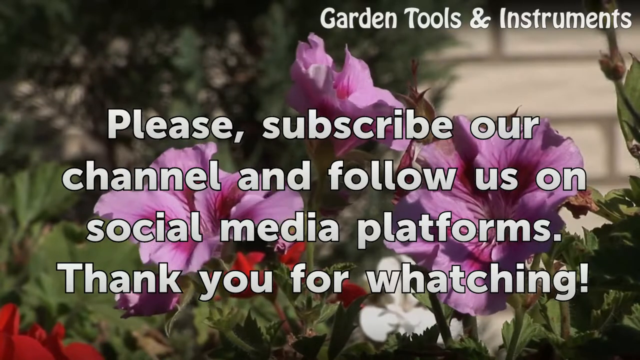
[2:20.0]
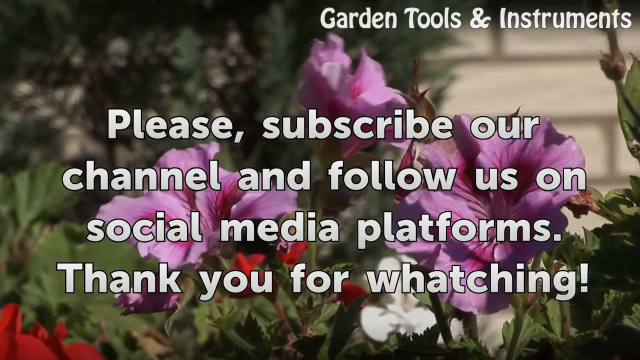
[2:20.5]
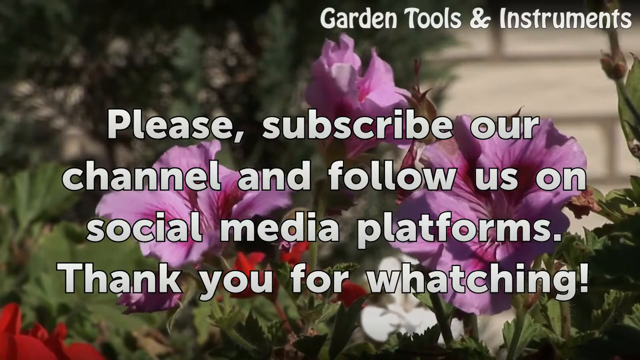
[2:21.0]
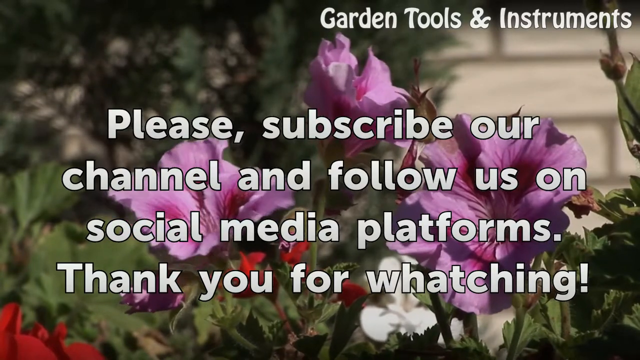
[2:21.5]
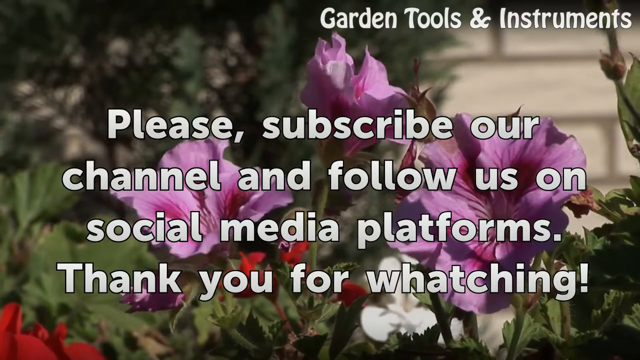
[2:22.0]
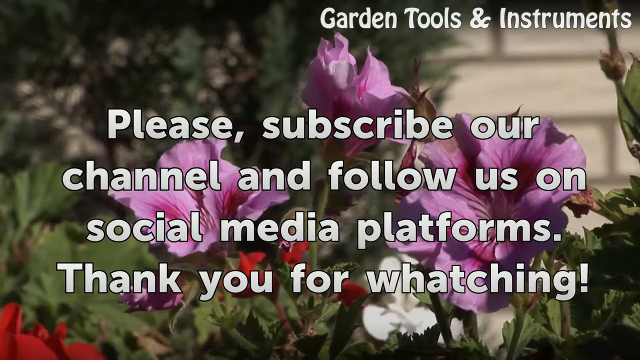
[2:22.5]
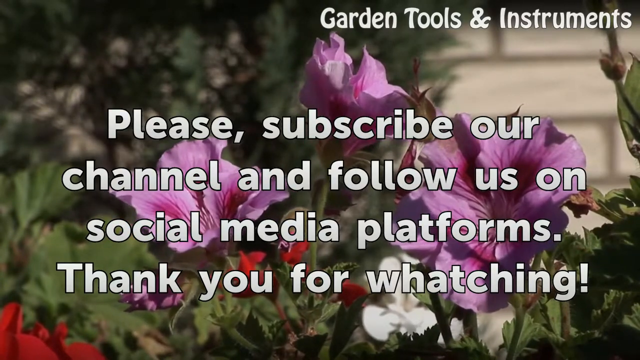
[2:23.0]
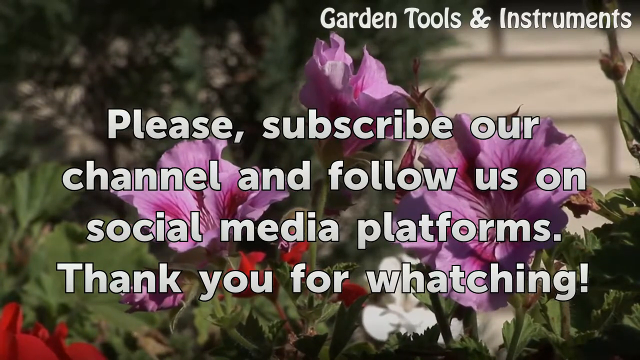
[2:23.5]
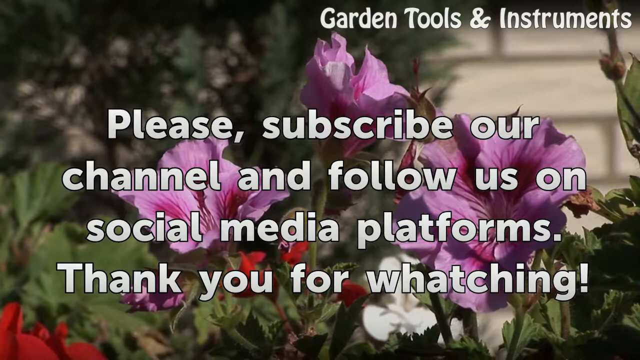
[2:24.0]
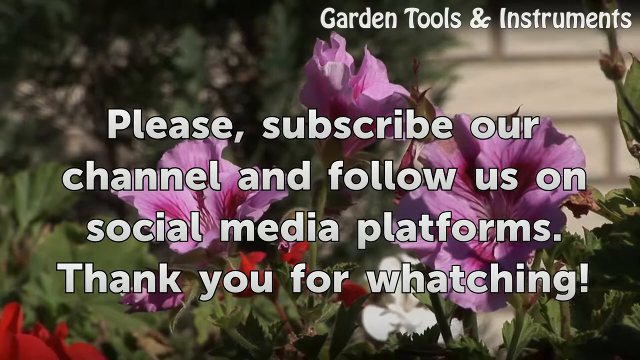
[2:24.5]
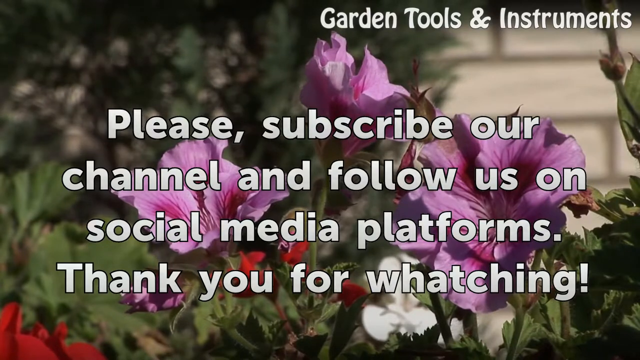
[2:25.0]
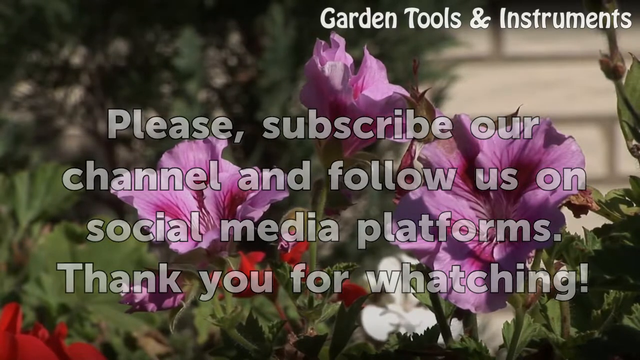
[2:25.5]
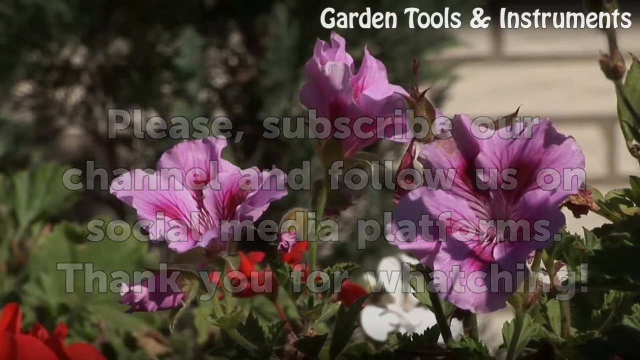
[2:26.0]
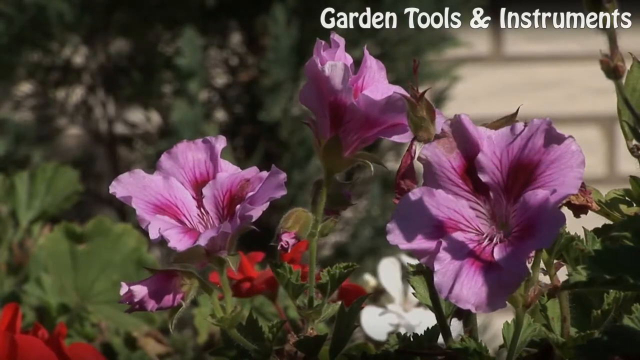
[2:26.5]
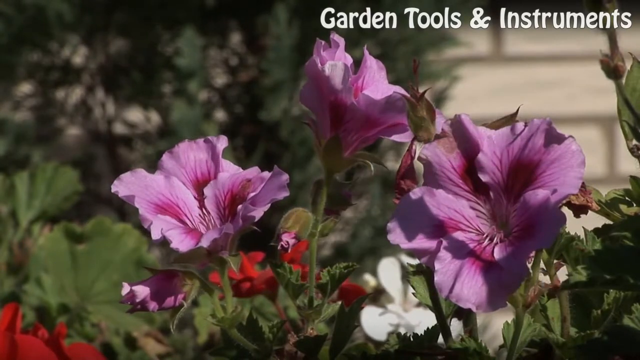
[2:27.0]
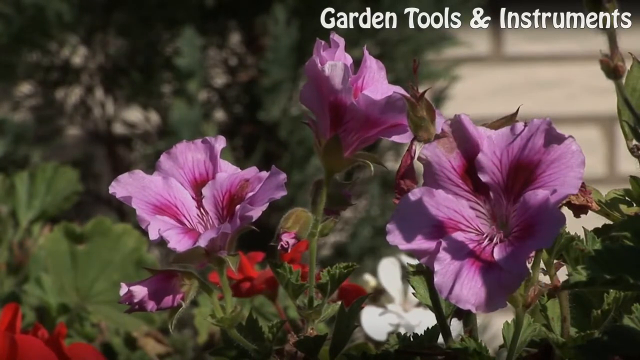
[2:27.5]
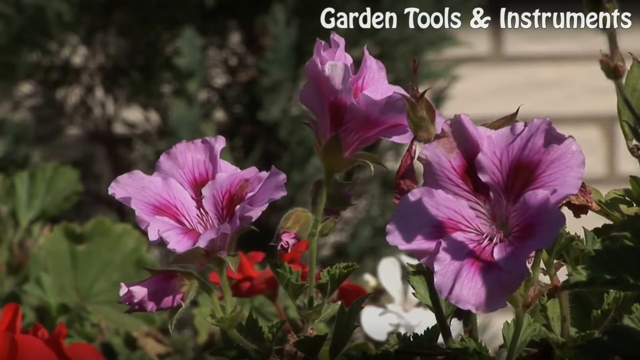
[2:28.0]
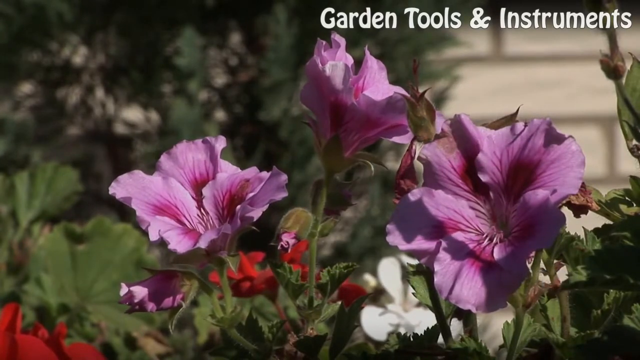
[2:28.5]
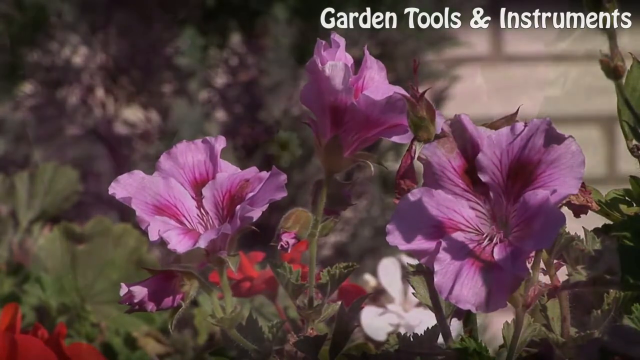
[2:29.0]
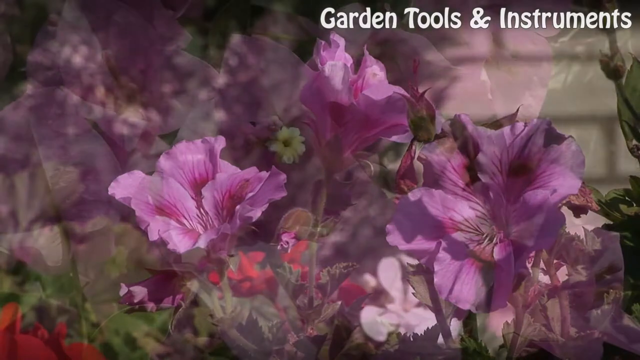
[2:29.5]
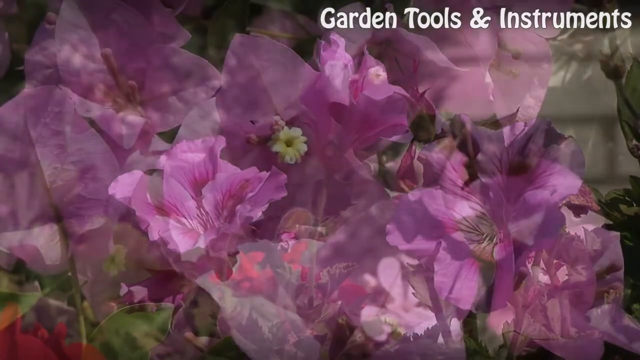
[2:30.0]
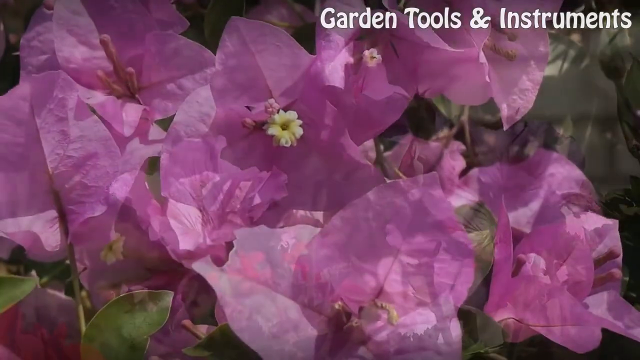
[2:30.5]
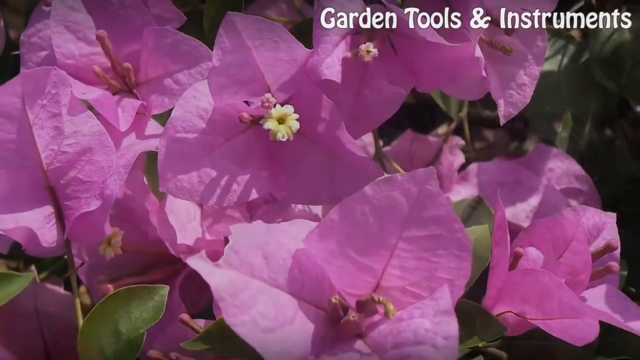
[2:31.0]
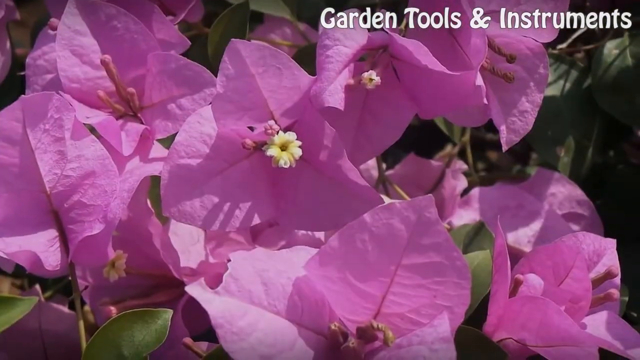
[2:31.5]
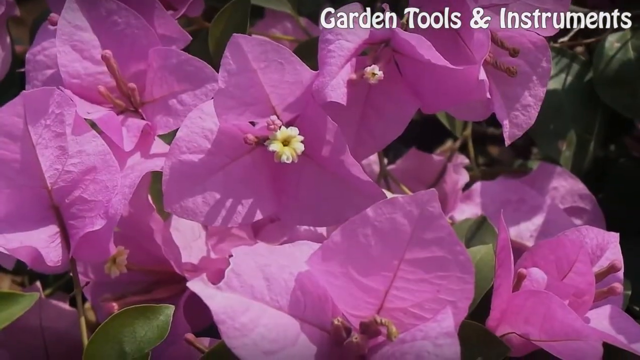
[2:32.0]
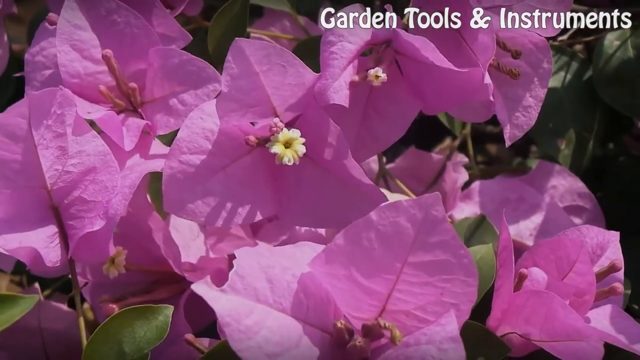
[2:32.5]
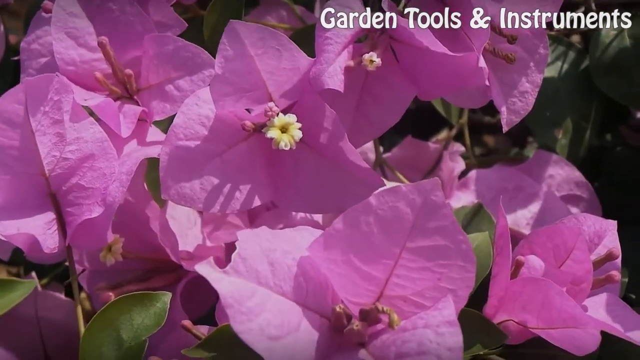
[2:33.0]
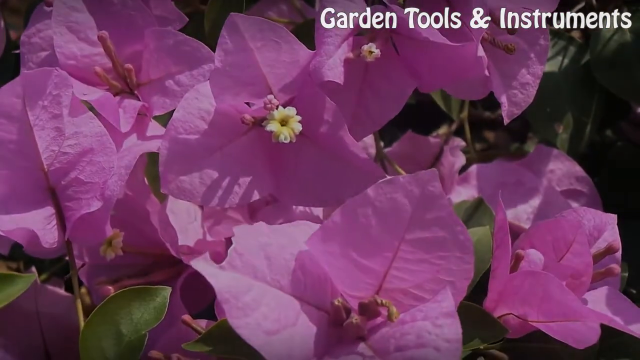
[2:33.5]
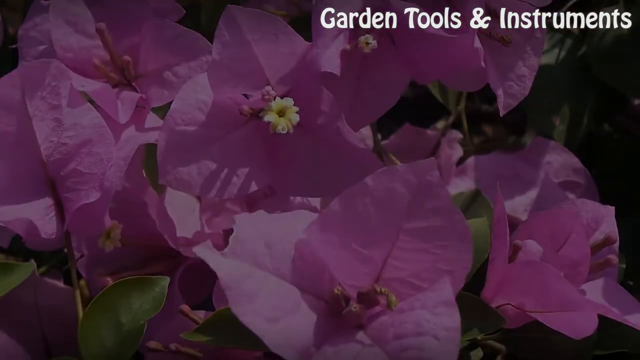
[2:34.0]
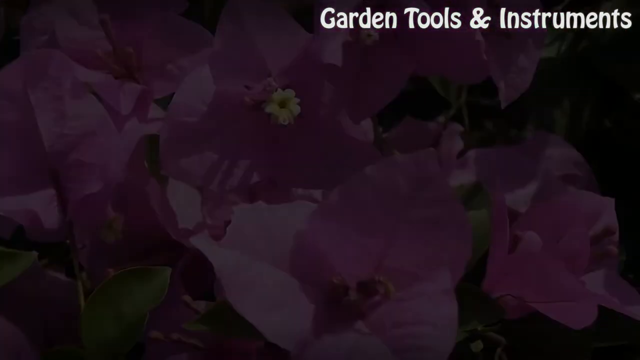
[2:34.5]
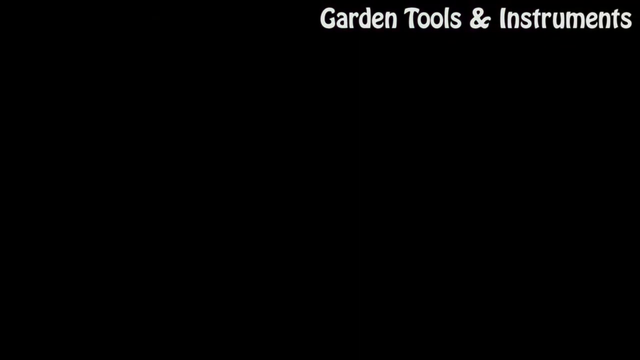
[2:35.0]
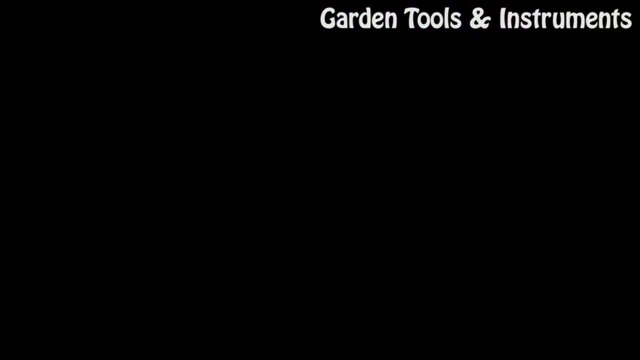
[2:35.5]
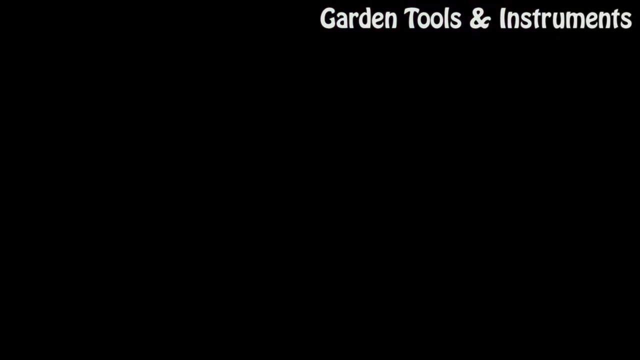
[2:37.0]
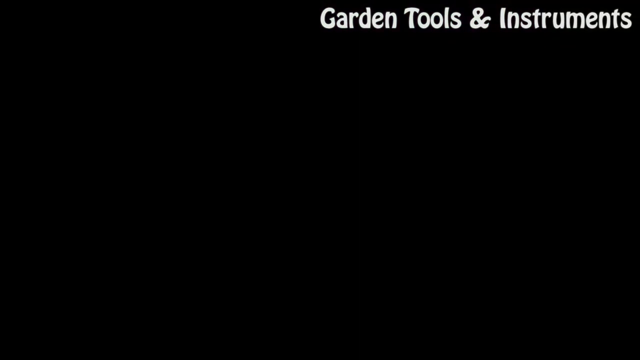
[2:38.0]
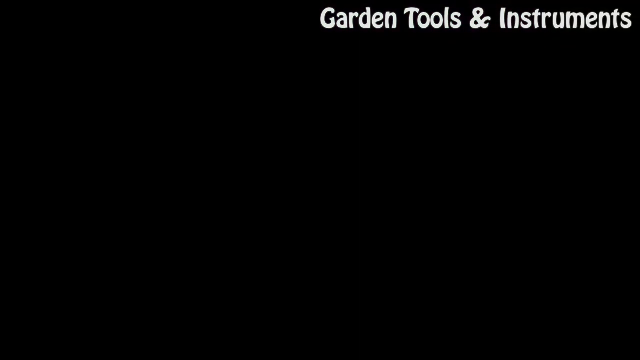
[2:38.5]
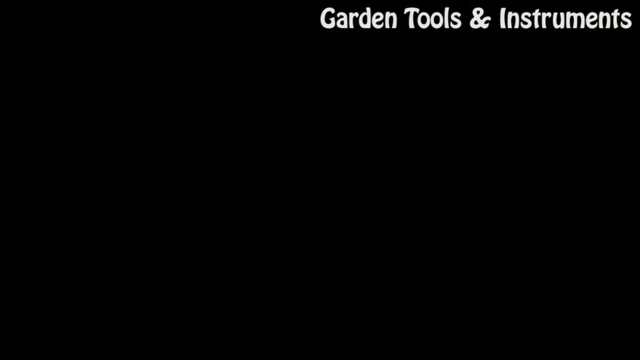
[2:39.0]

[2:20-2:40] A close-up shows pink flowers with purple centres, with a few smaller red and white ones in the background. Superimposed in a large white font with a very fine black border is the text "Please subscribe our channel and follow us on social media platforms. Thank you for whatching.", with watching misspelled as "whatching". The text "Garden tools and instruments" is in the top right corner throughout the entire video. The flowers sway in the background, and then the text disappears. The video transitions to a close-up of a different, very delicate-looking leafy pink flower, some of the flowers having a tiny yellow centre. That eventually disappears and the screen goes black, with only the "garden tools and instruments" text remaining in the top right.